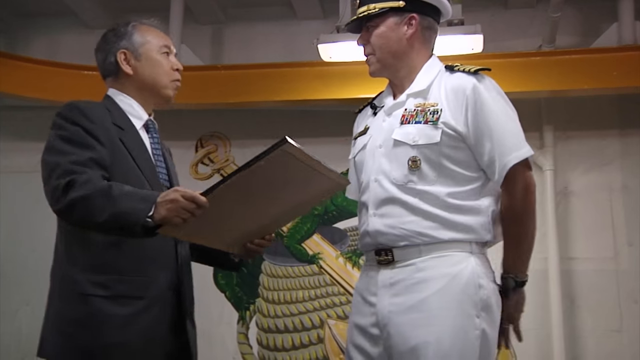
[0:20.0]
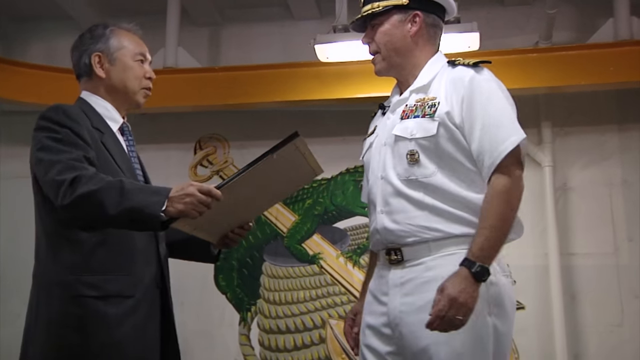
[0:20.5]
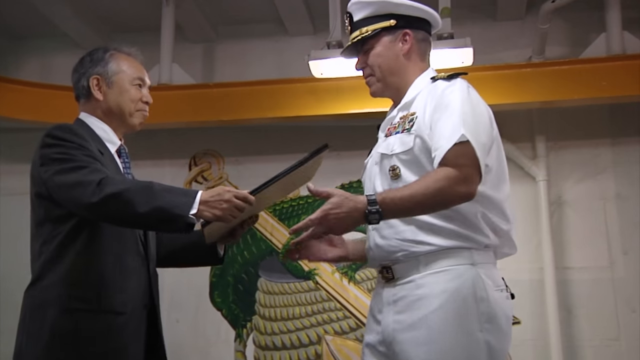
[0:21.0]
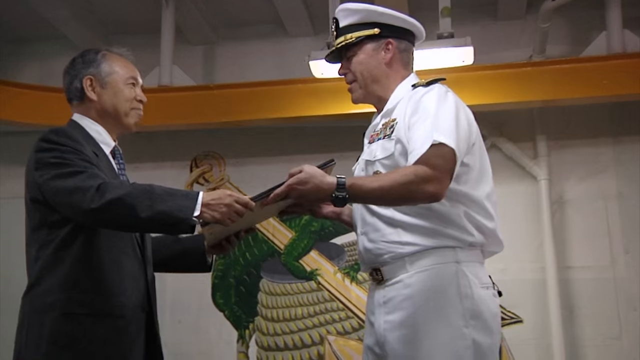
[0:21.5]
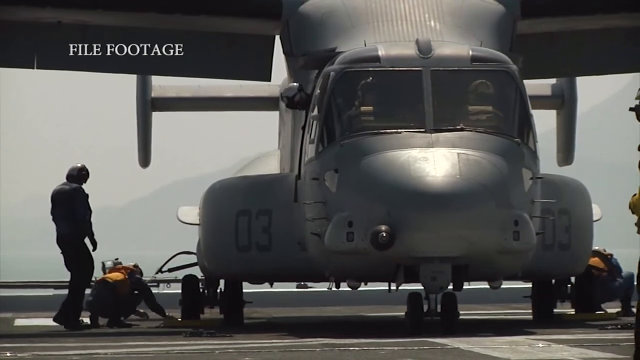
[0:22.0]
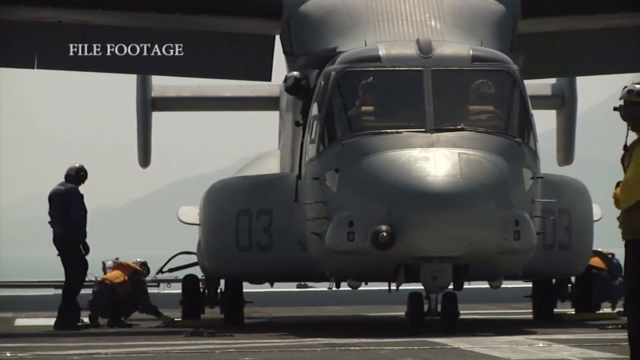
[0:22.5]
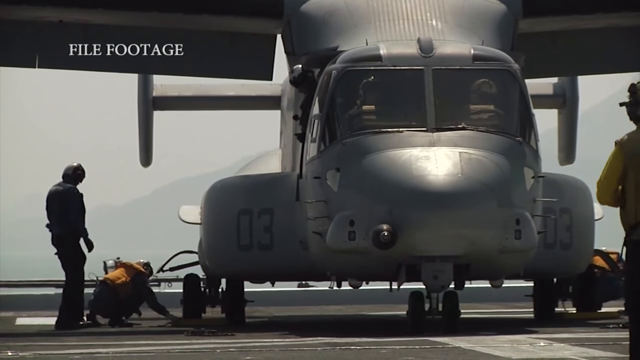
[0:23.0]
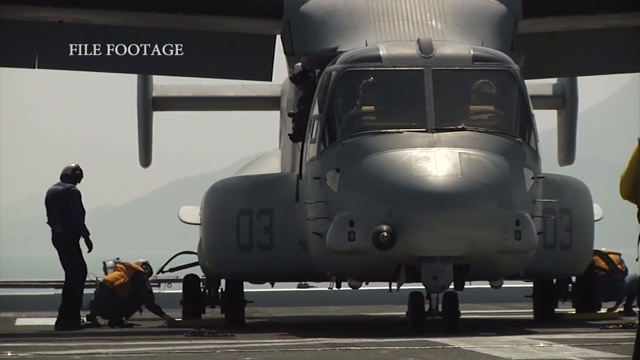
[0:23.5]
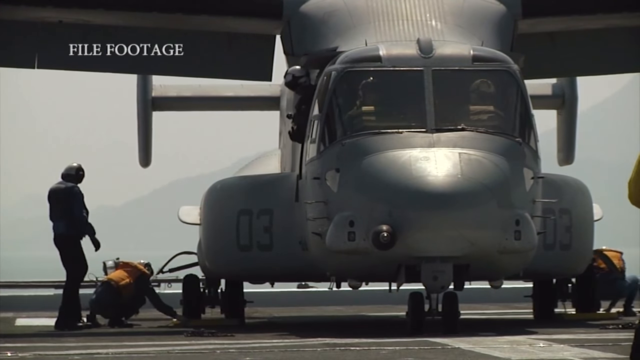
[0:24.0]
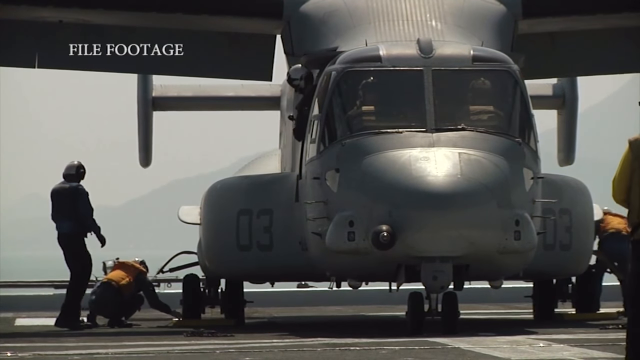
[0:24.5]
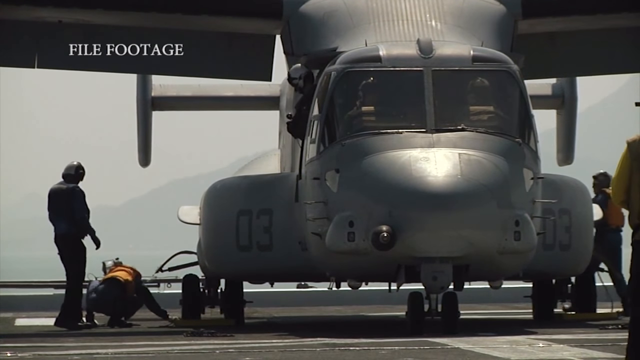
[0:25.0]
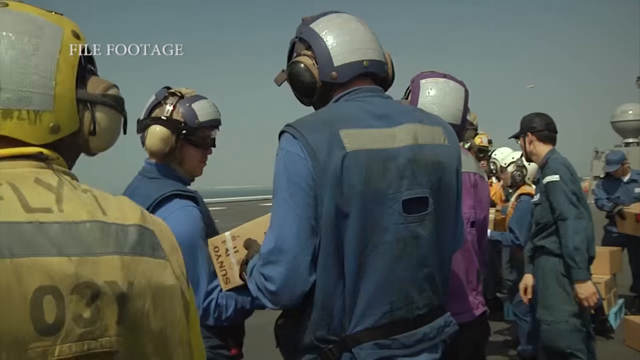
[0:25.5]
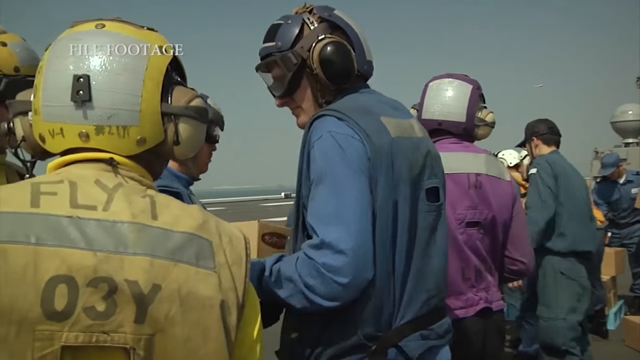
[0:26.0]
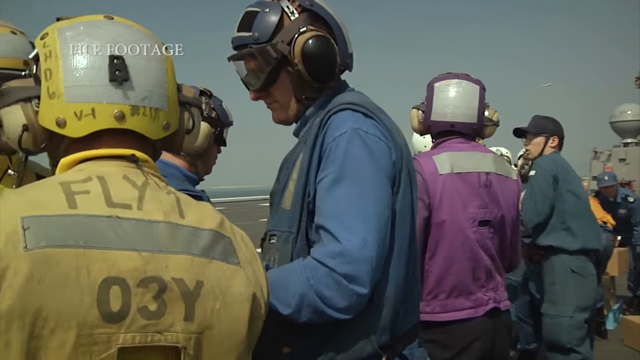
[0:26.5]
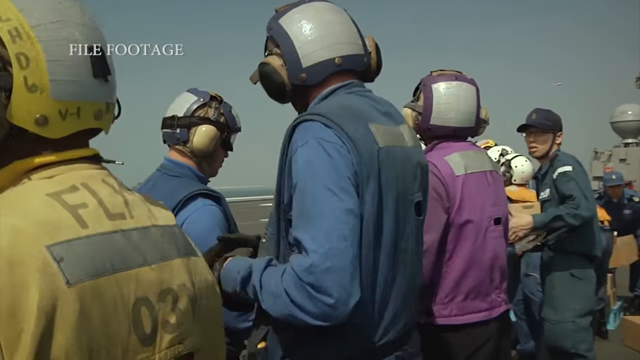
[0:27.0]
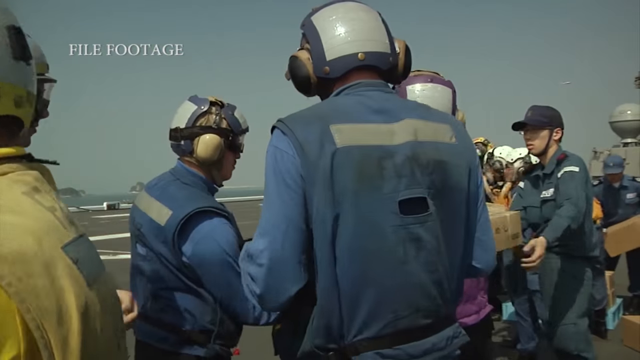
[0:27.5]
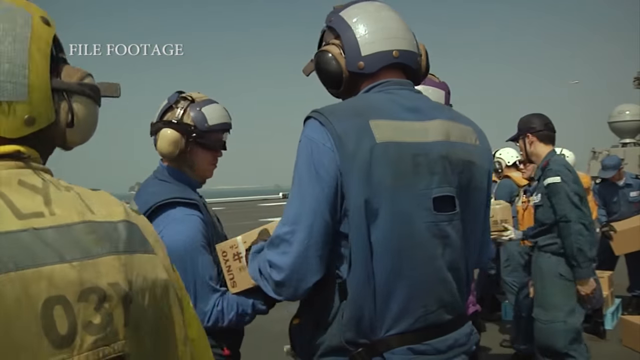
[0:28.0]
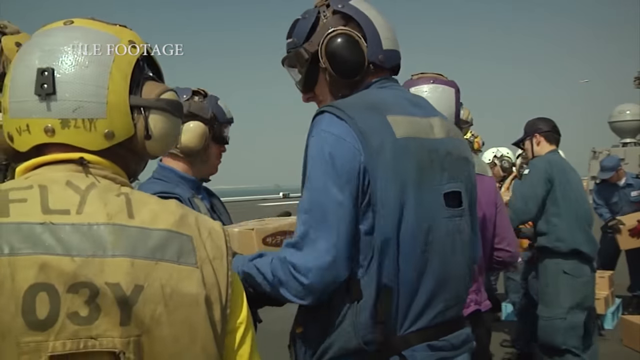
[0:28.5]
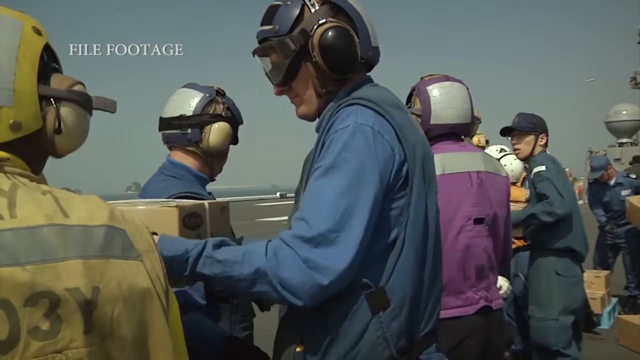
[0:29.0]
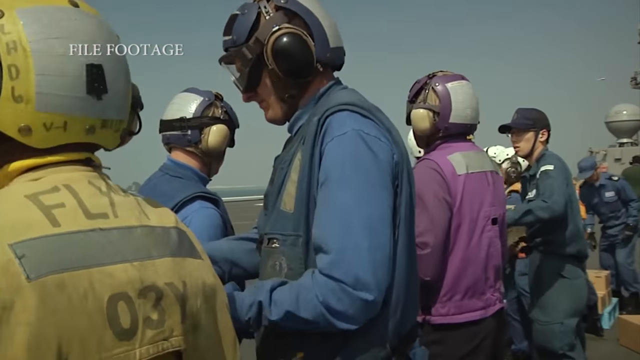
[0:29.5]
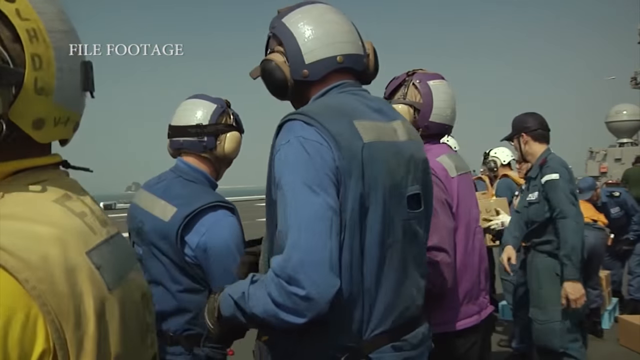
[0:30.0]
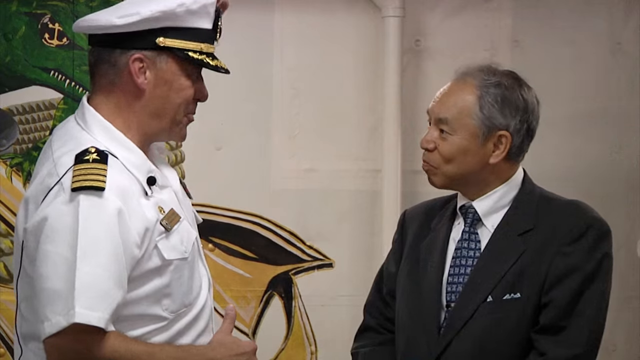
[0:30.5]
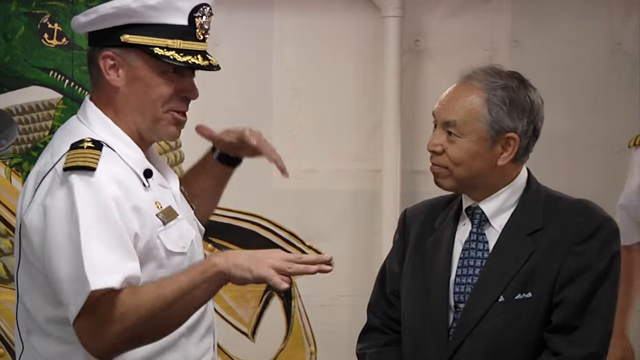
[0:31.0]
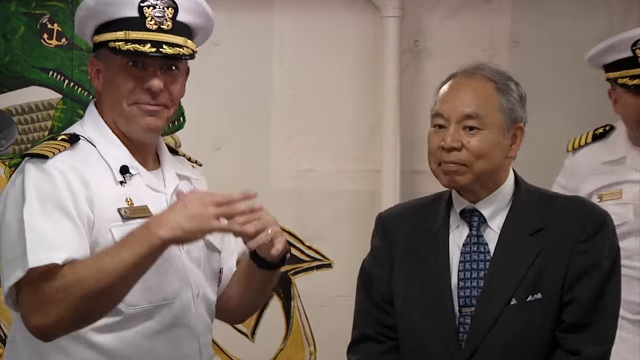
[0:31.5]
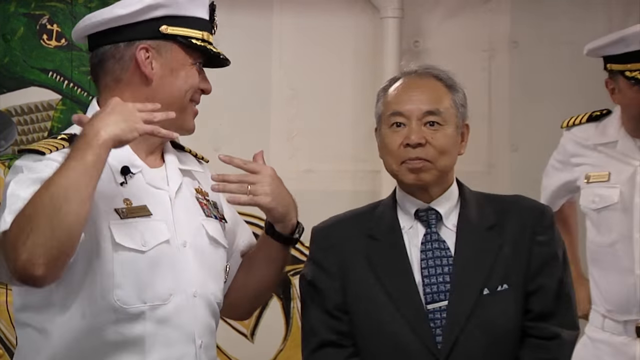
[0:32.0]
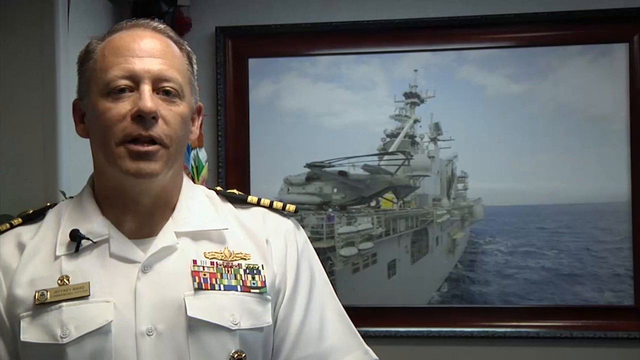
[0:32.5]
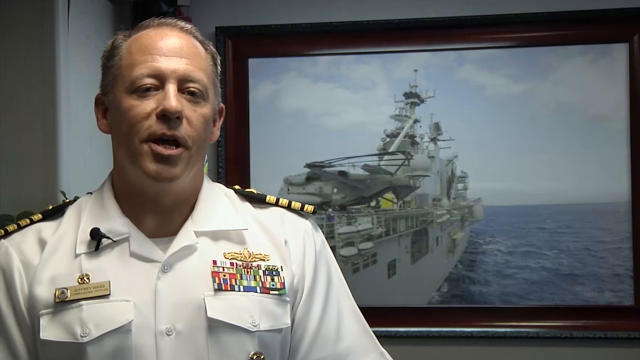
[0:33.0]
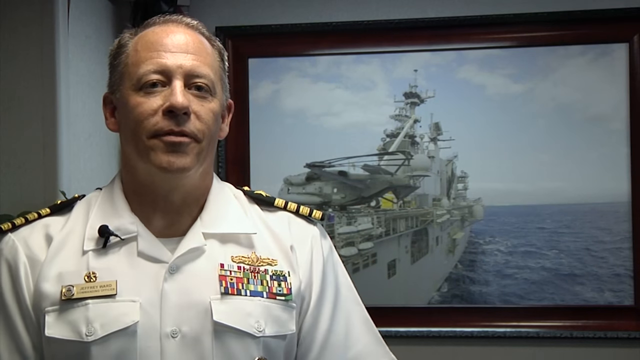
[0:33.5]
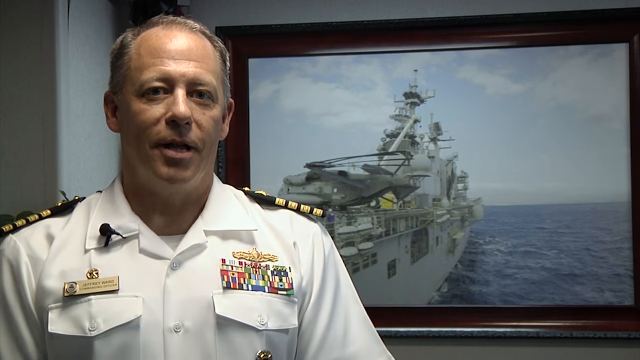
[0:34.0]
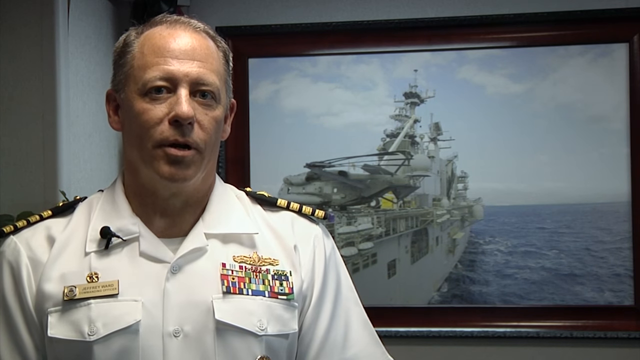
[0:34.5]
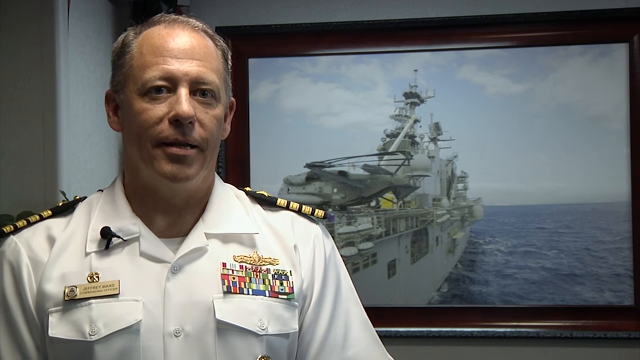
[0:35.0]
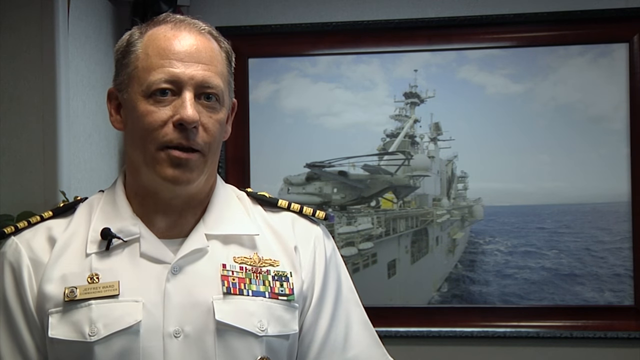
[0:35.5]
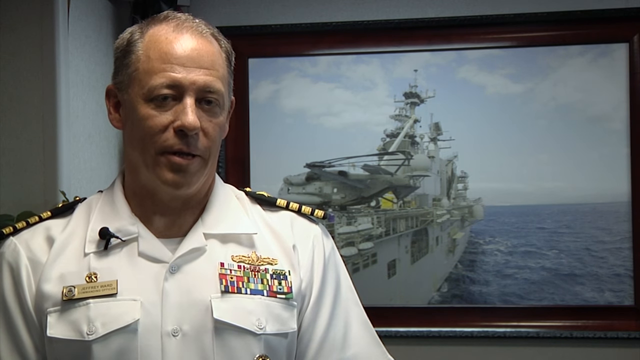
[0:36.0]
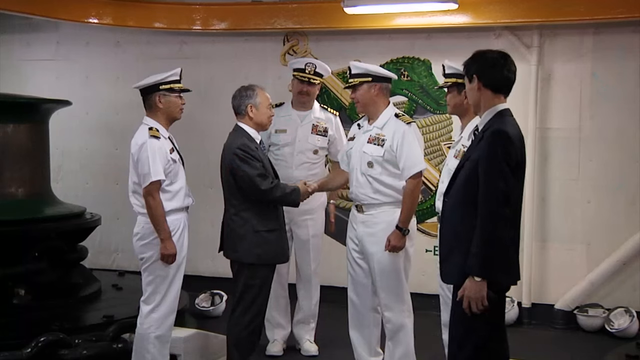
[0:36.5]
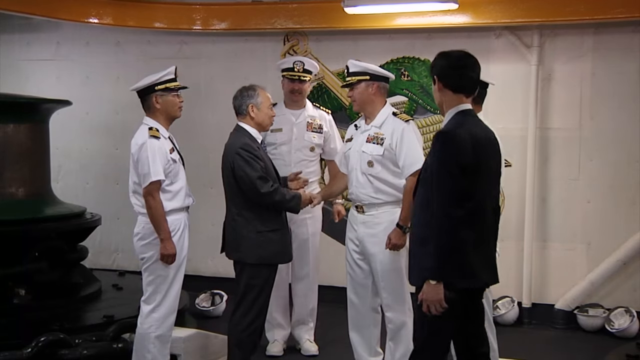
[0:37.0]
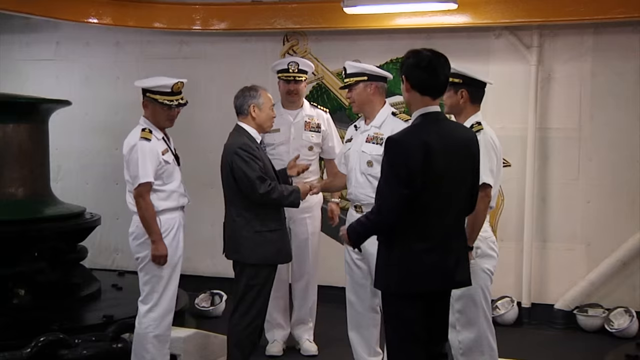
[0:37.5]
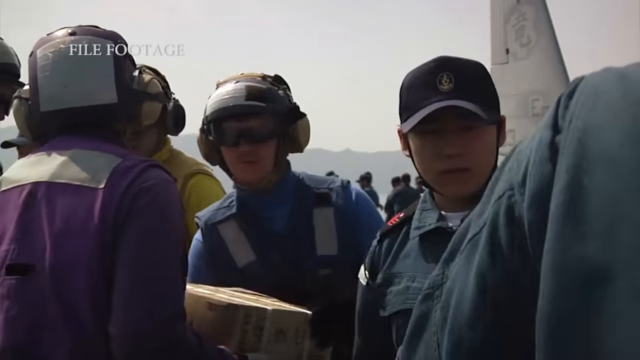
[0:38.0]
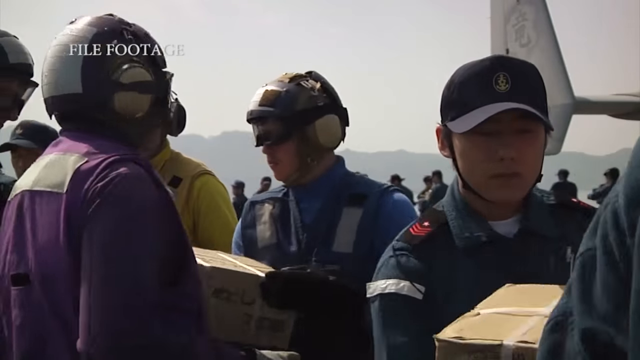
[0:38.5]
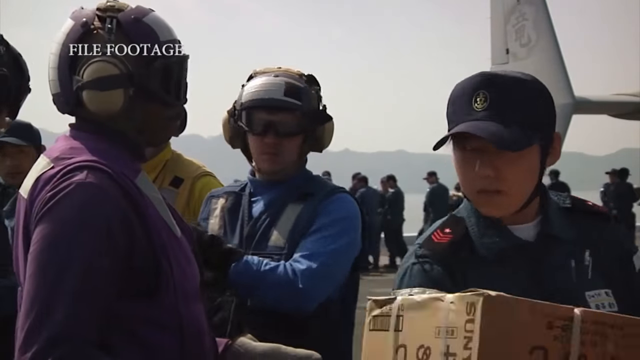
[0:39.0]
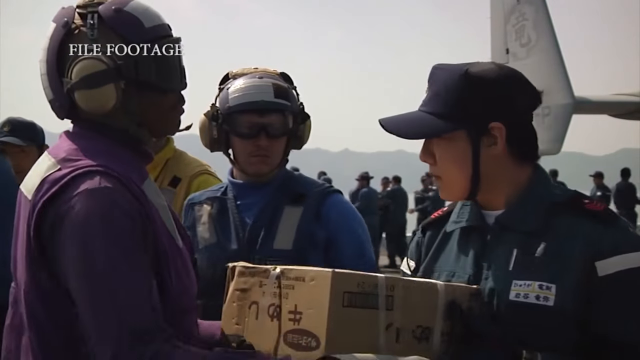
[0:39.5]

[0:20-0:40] The Japanese man and the captain are together, and the Japanese man very carefully gives the captain a framed picture or plaque of some sort, handing it over with both hands; it is received with both hands, and they smile at each other. The scene changes to file footage of people working on a very large jet or plane of some sort, possibly a helicopter since it seems very windy where the technicians are working. A group of what may be mechanics and technicians pass boxes in a relay from one location to another; it looks like a mix of Americans and Japanese. They wear protective vests that seem color-coordinated, with yellow, blue and purple visible, while the Japanese officers apparently wear dress shirts showing their name and rank. The video returns to the captain talking to the Japanese man, making very large hand gestures like someone describing a roller coaster. The Japanese man smiles but looks very guarded, almost wary. The captain is then shown alone in his room talking, and then shaking hands with the Japanese man. There appear to be four officers in white uniforms, the central Japanese man, and another man who is maybe an assistant or representative of some sort, and they shake hands. The group is shown again doing the relay of moving the boxes.